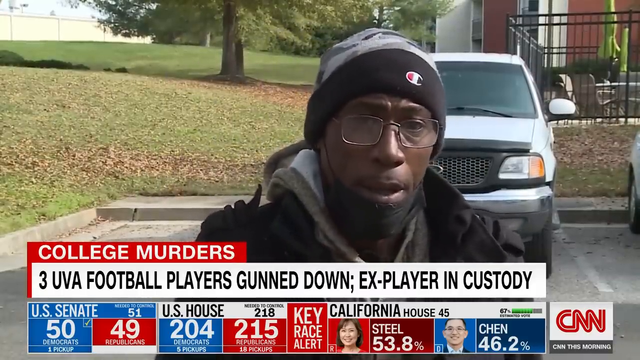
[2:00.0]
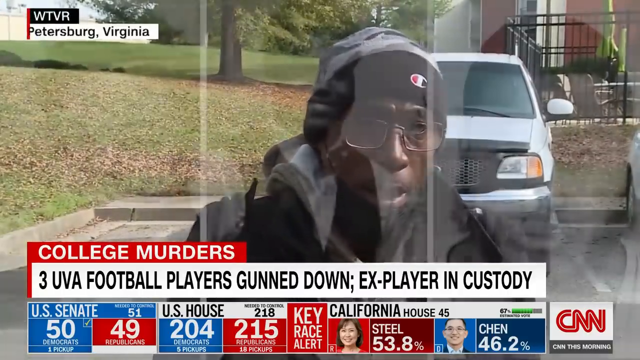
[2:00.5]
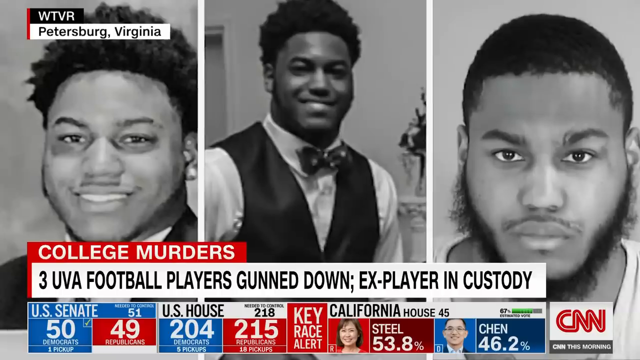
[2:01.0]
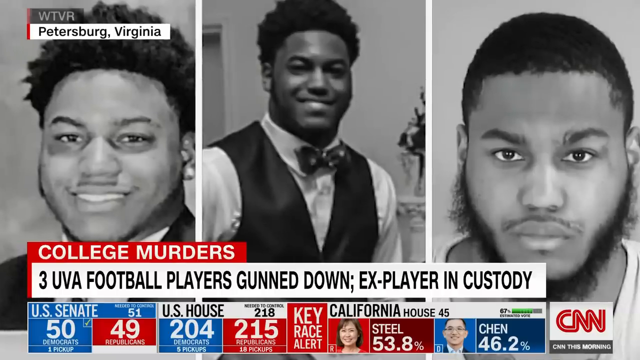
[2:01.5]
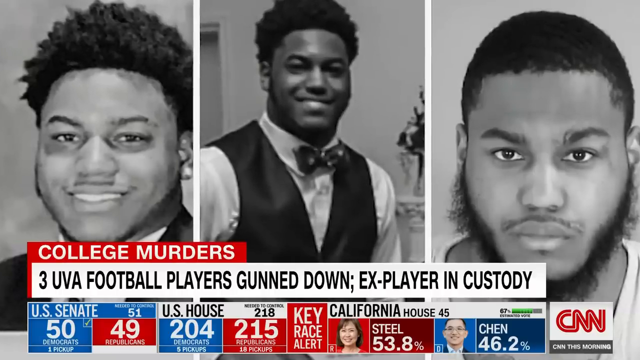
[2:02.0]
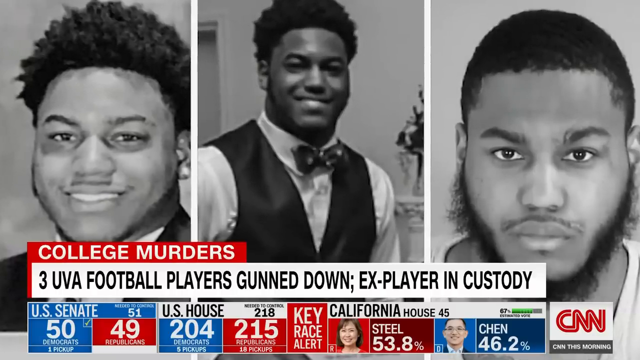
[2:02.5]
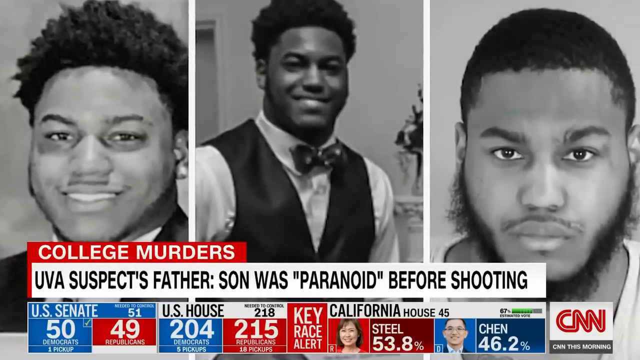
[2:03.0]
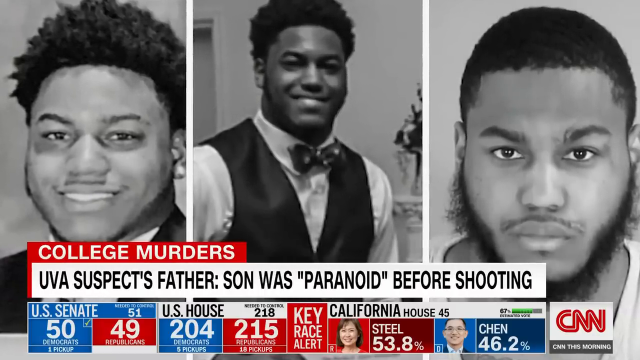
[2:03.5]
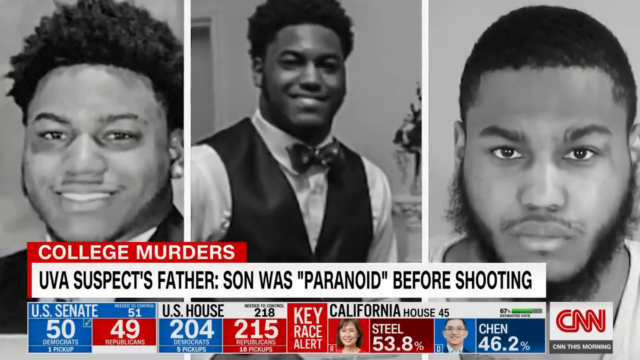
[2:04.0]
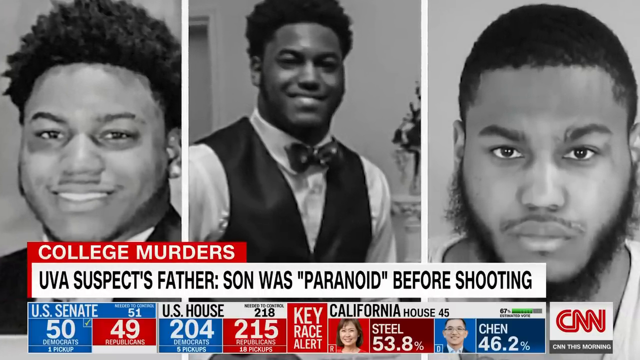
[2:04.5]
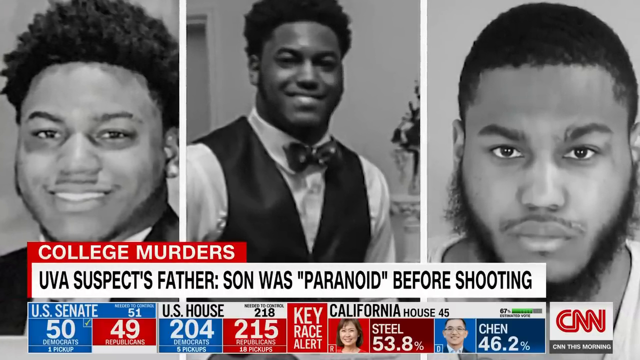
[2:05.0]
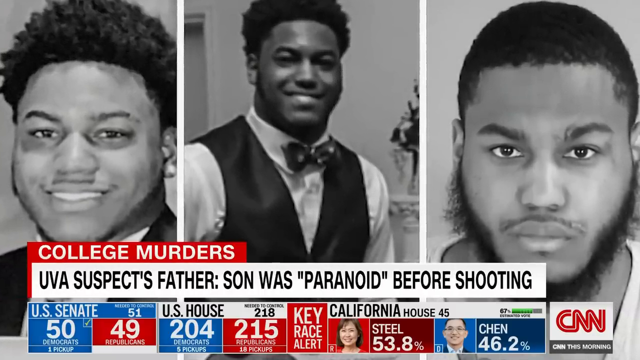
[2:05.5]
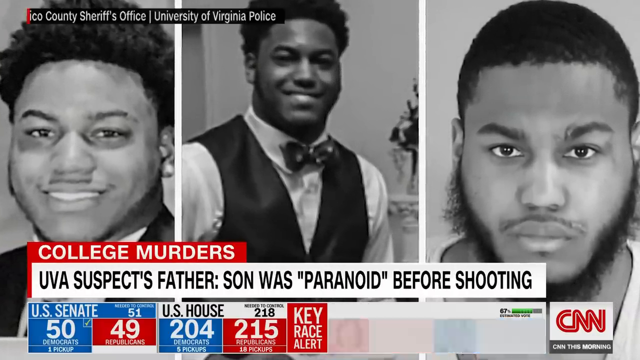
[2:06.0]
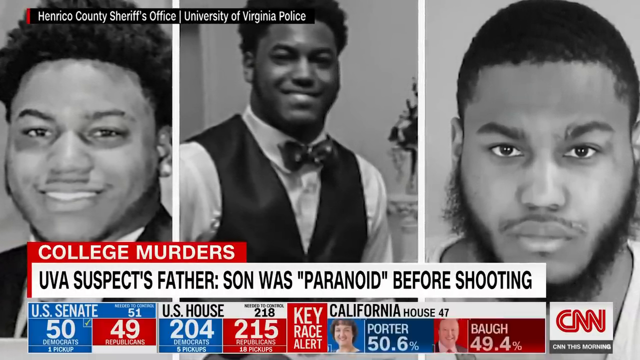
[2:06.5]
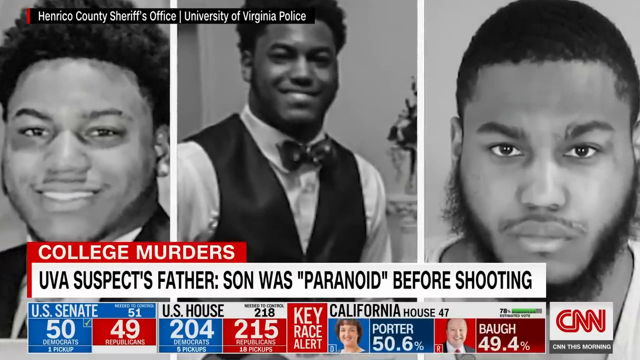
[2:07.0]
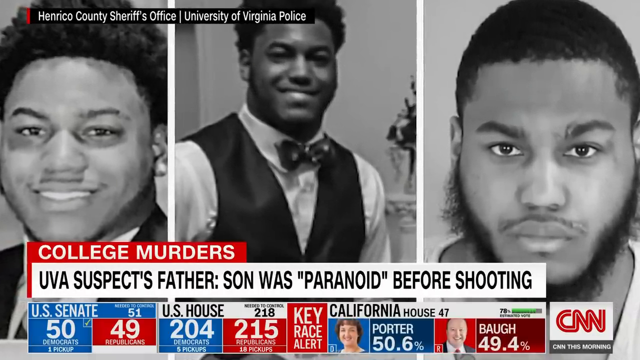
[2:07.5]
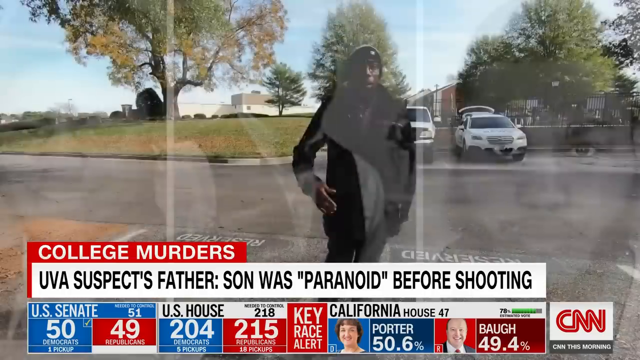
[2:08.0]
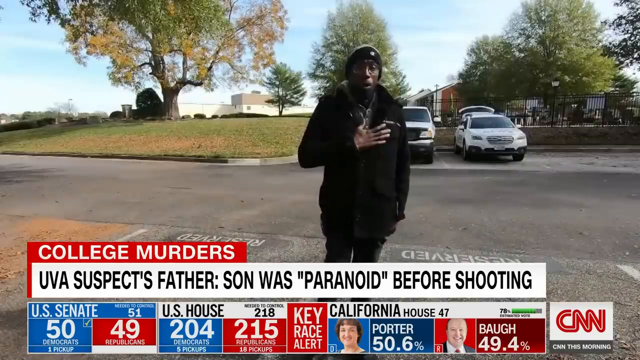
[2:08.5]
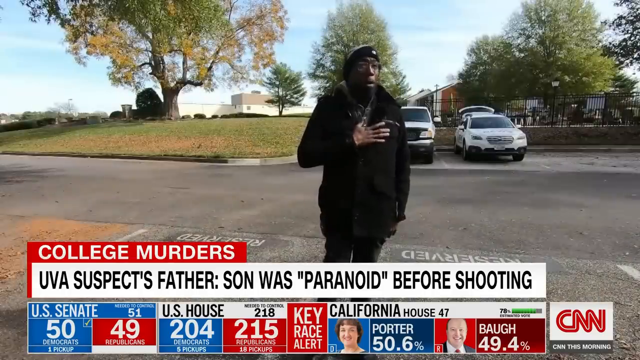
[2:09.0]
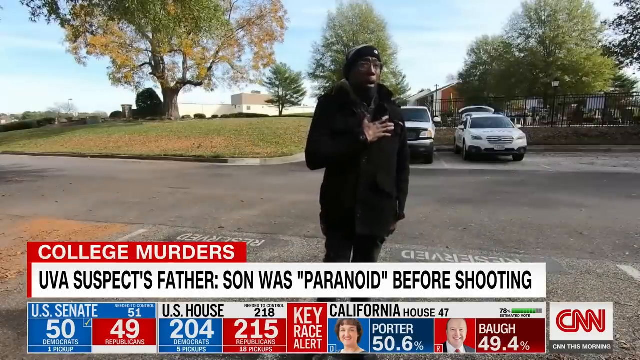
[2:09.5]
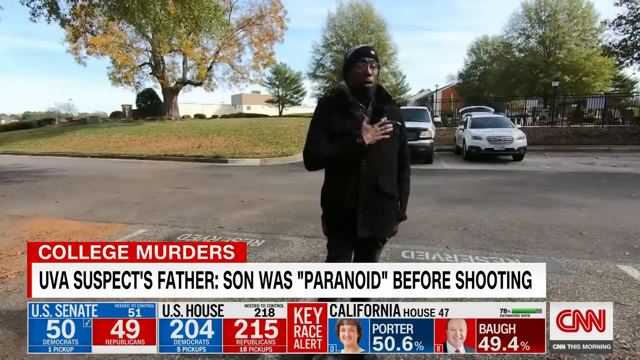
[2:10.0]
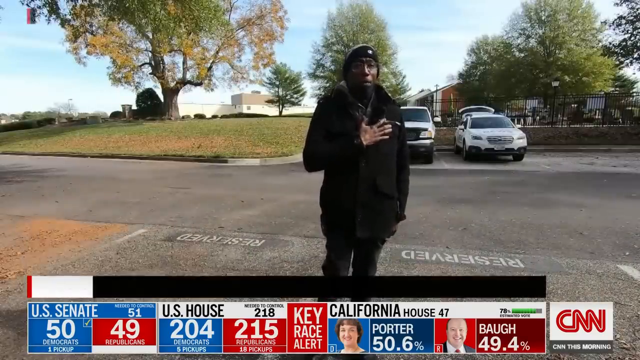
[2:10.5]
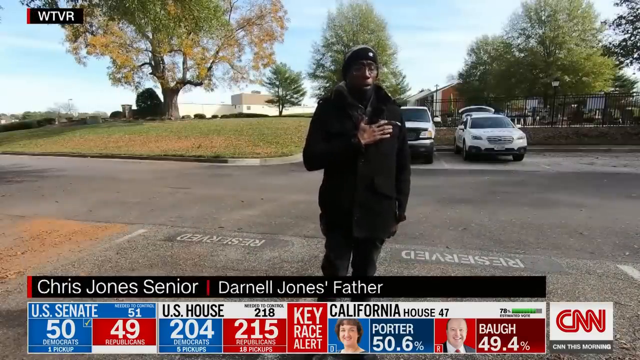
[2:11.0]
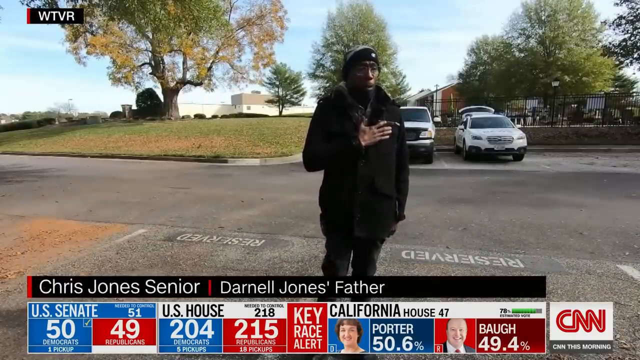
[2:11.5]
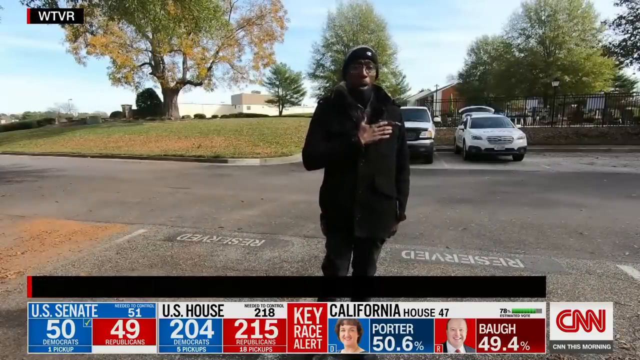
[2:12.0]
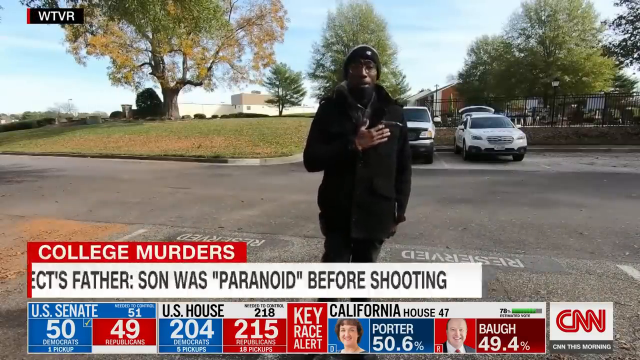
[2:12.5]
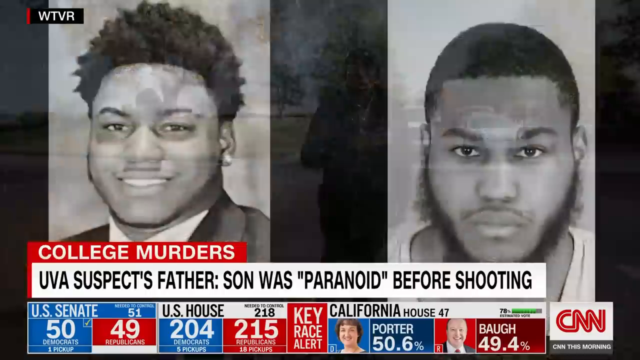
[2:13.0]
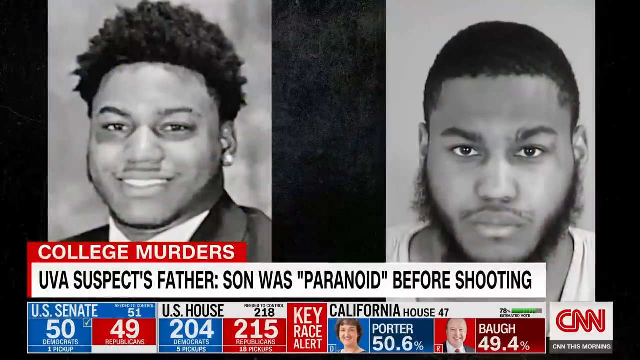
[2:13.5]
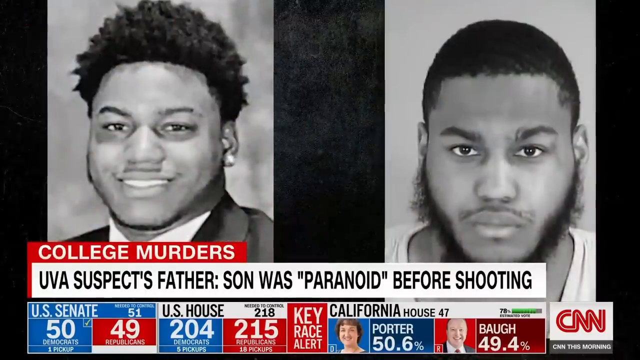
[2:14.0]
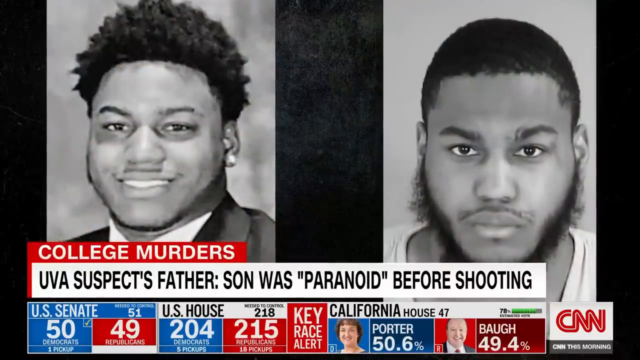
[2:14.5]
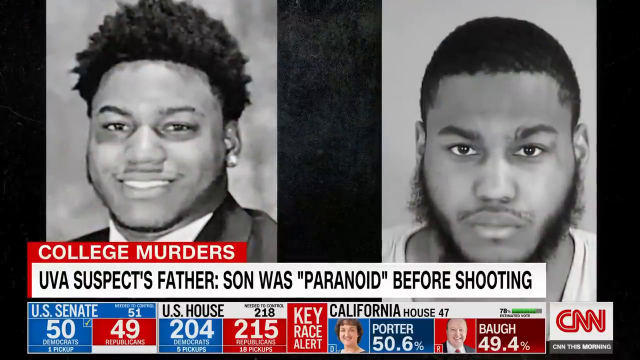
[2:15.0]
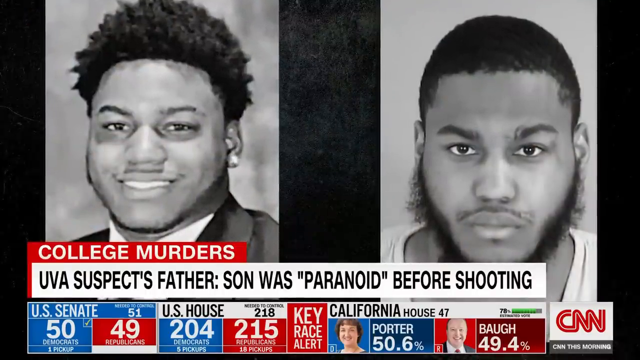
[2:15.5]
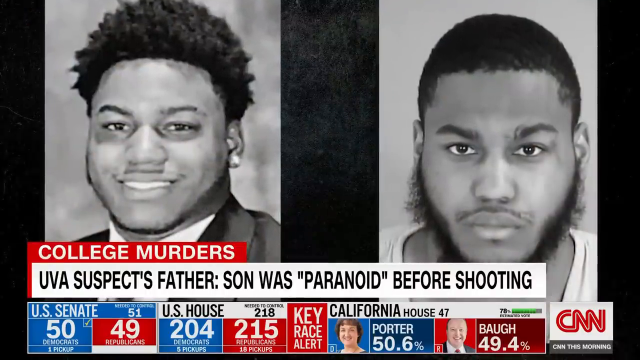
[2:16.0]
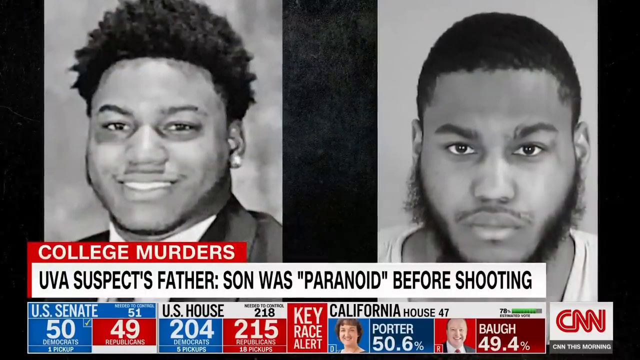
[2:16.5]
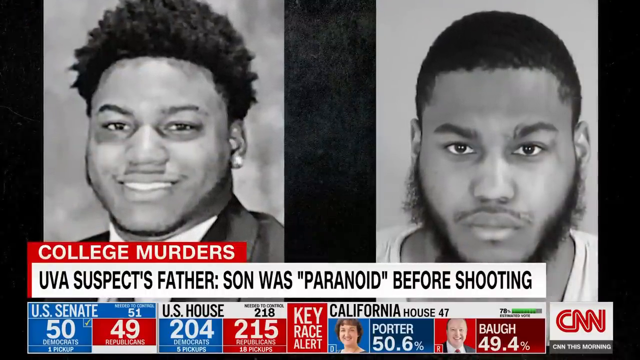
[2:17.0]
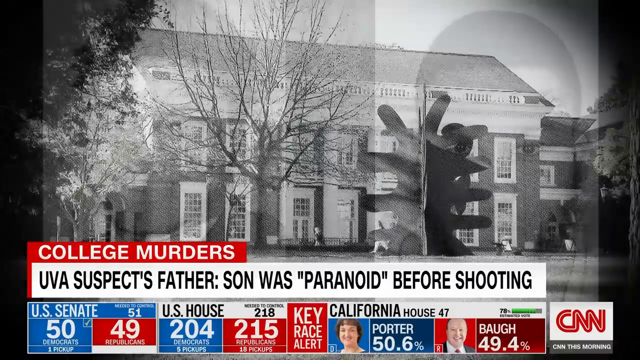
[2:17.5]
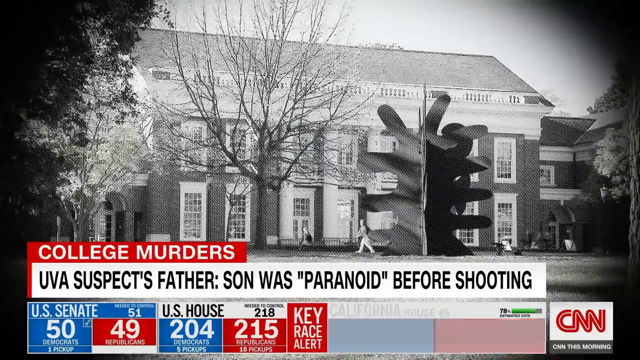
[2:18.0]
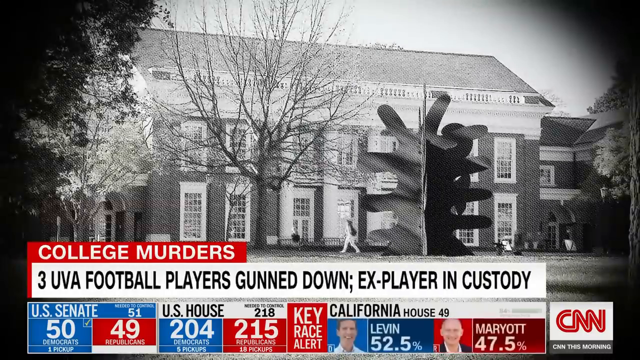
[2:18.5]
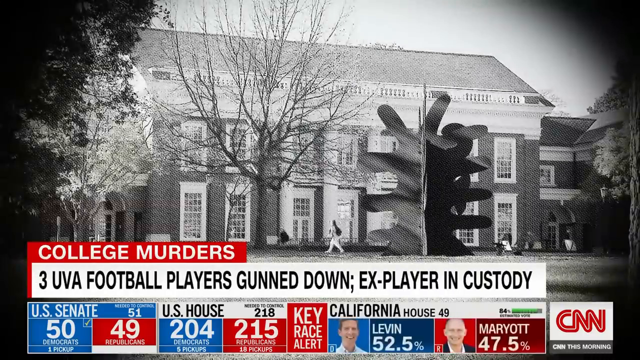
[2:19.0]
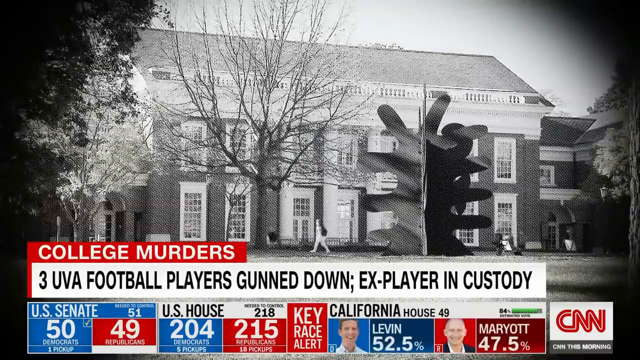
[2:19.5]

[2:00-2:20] The CNN story titled "College Murders," with the text "Three UVA football players gunned down, ex-player in custody," shows the location as Petersburg, Virginia, along with a photo of the same man appearing in three panels. In the first two he has a similar hairstyle, and in the last one, at the extreme right, his hair is short and he has a beard and a slight mustache. As the camera zooms in on these photographs, the banner underneath the title changes to read "UVA suspect's father, son was paranoid before shooting." The footage then shows an older man wearing a beanie and a black winter jacket, standing in a parking lot with reserved spots. Behind him is a large lawn with trees and two white parked cars in the background, and behind that is a single-story building behind a black fence. It appears to be an interview with the suspect's father.